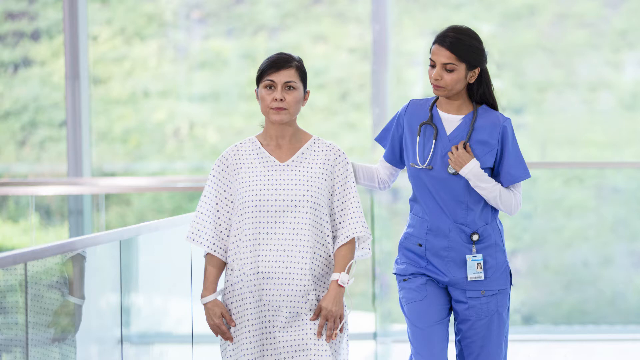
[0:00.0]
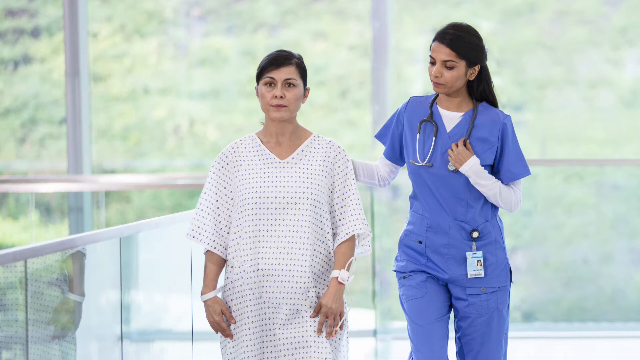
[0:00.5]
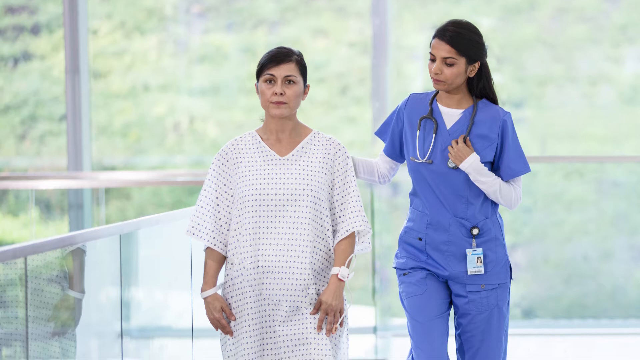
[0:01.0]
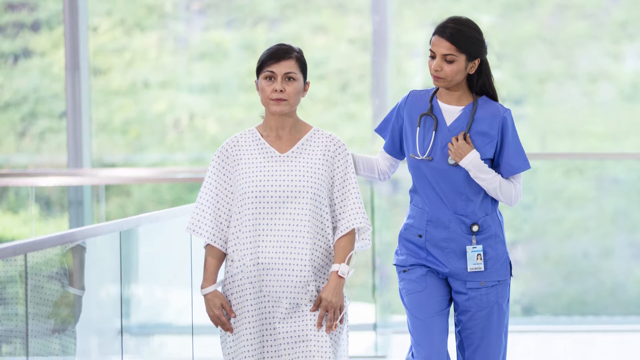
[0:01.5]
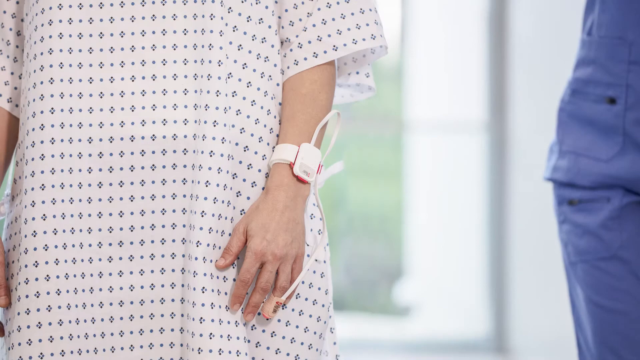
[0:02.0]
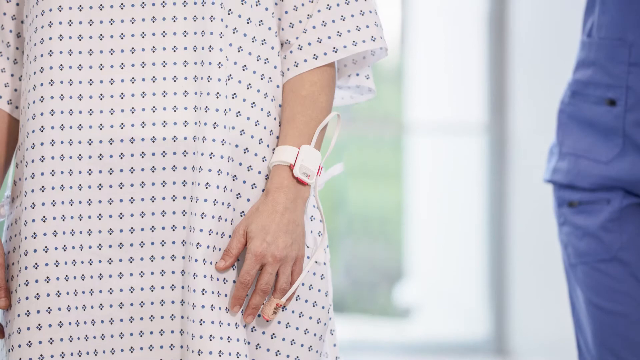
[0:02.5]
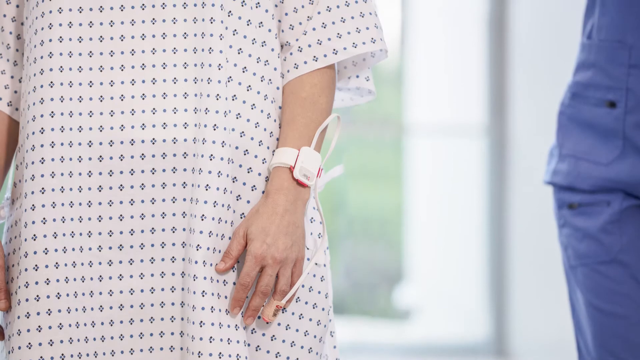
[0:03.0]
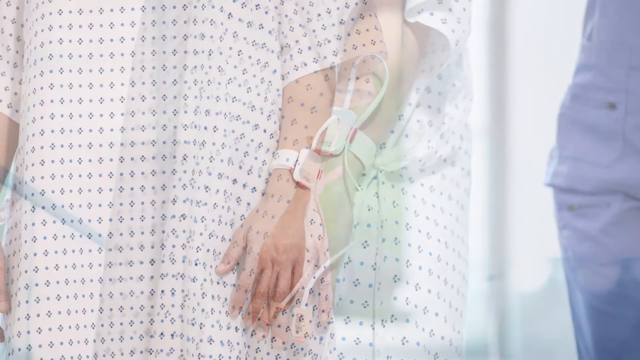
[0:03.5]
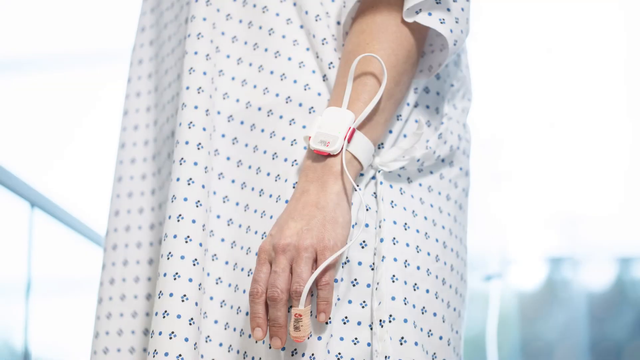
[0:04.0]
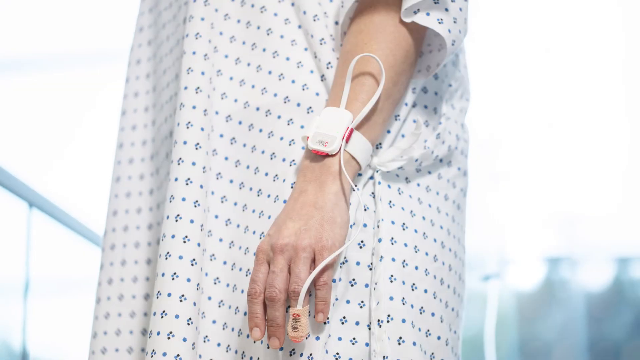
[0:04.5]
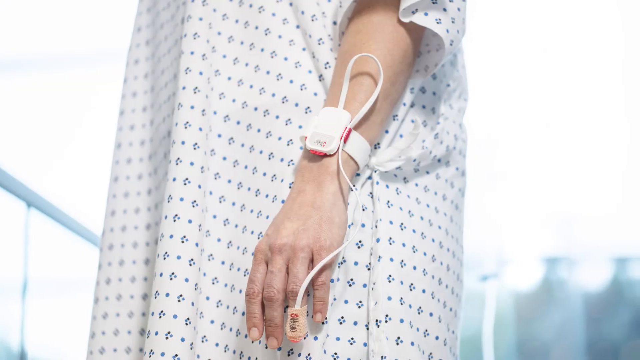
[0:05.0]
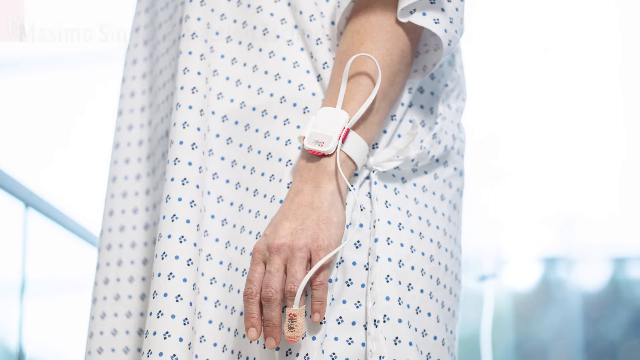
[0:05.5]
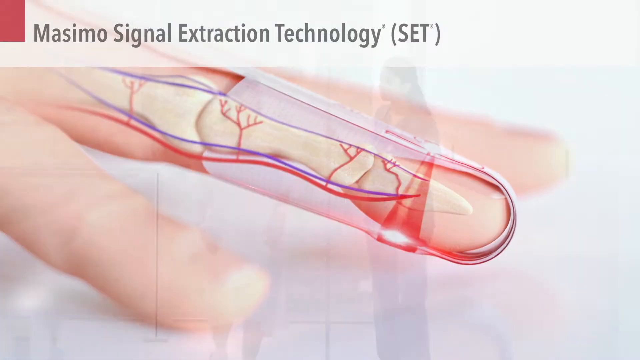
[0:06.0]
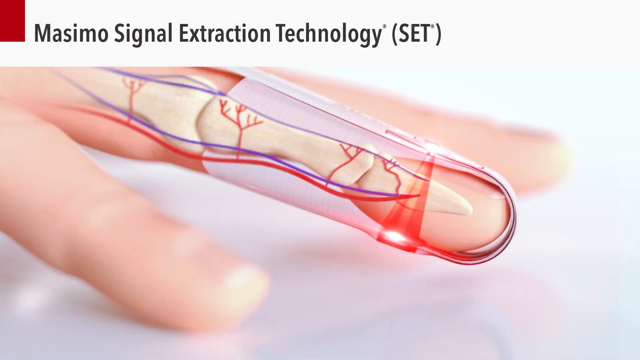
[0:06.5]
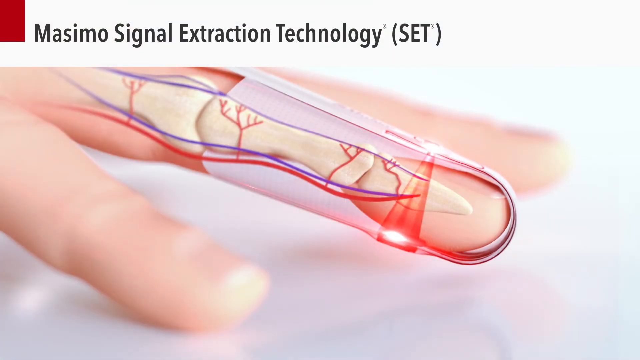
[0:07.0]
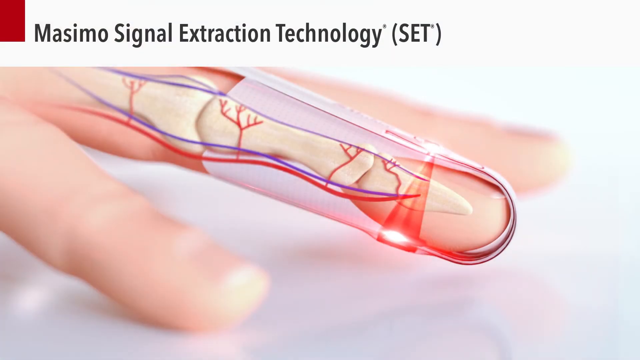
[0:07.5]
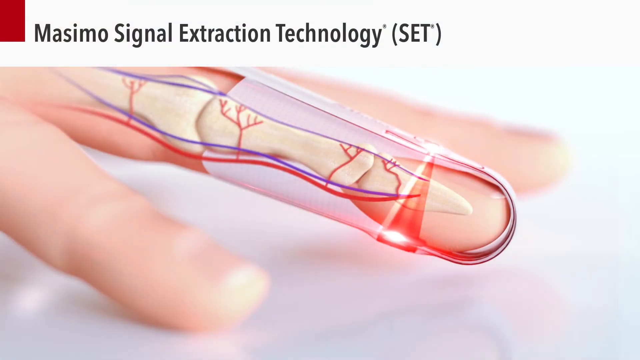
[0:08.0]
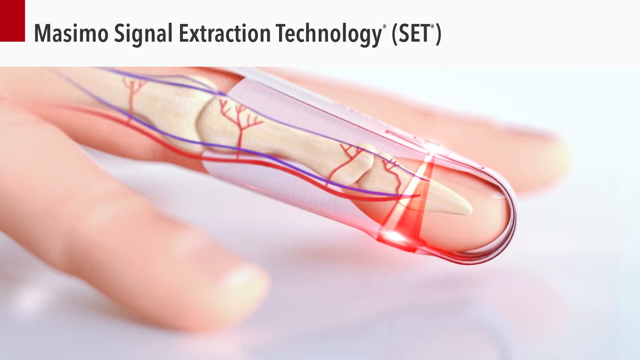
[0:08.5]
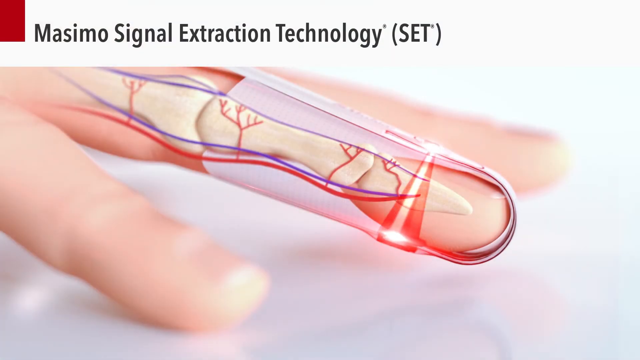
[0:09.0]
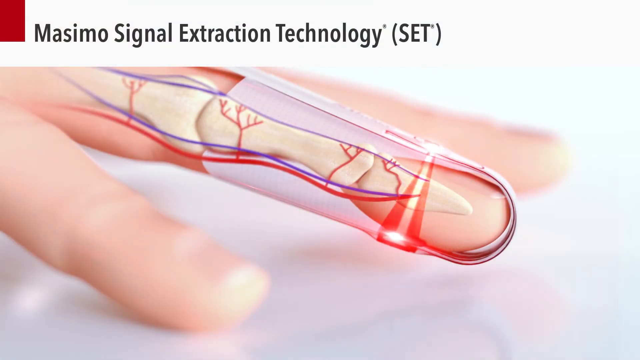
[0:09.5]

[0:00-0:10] A nurse is with a patient who wears a white gown with something like polka dots on it. On the patient's left wrist is a white monitor with a wire sticking out of it, attached to what looks like the middle finger. The video then cuts to a computer-animated image of a finger, the middle finger, with a device on it. The inside of the finger is visible, showing the bone and what look like red and blue veins, and some kind of light shoots from the device through the finger and into the other side of the device.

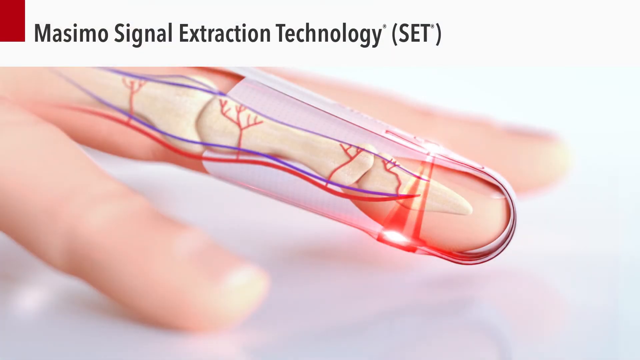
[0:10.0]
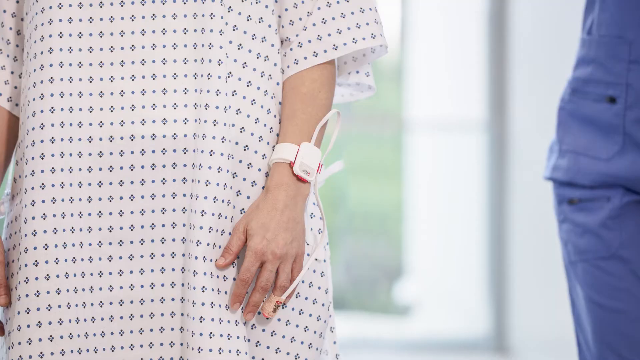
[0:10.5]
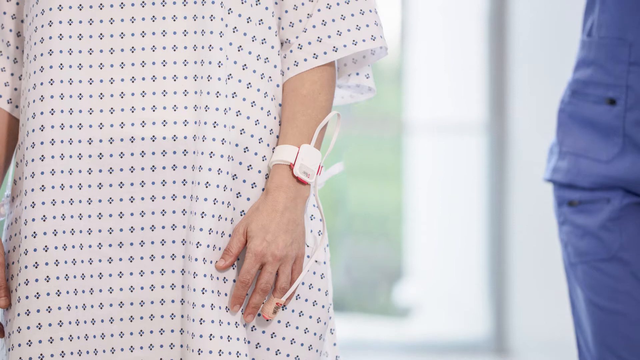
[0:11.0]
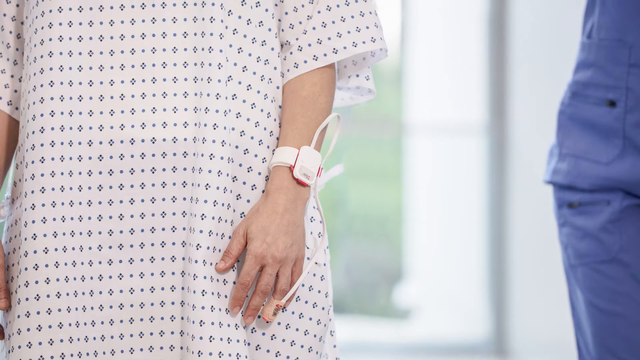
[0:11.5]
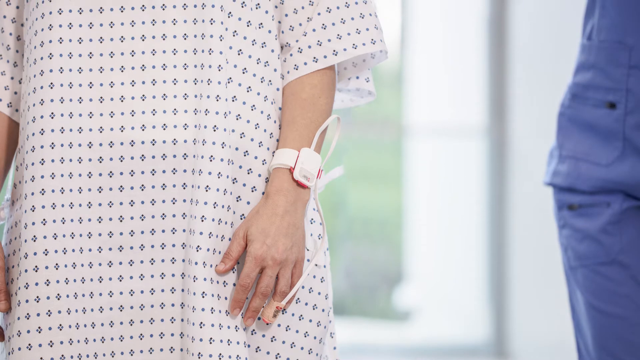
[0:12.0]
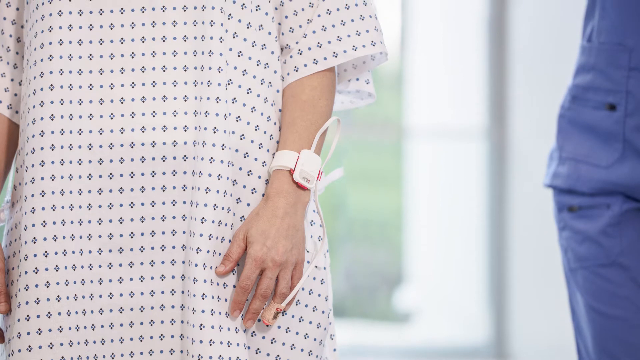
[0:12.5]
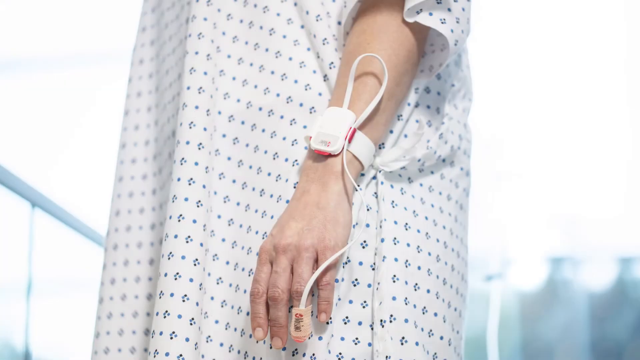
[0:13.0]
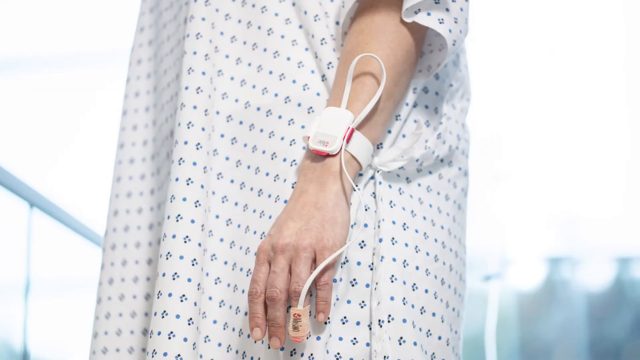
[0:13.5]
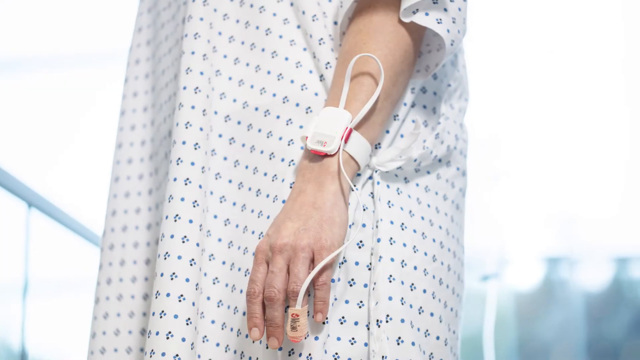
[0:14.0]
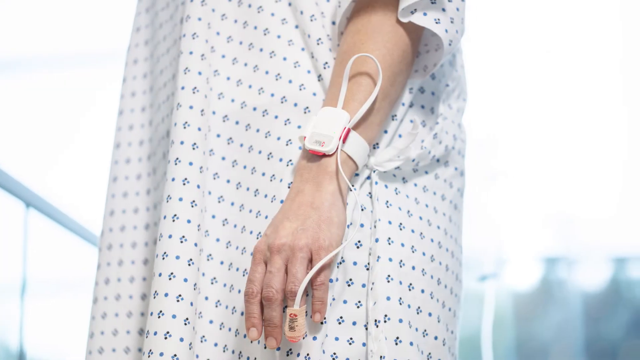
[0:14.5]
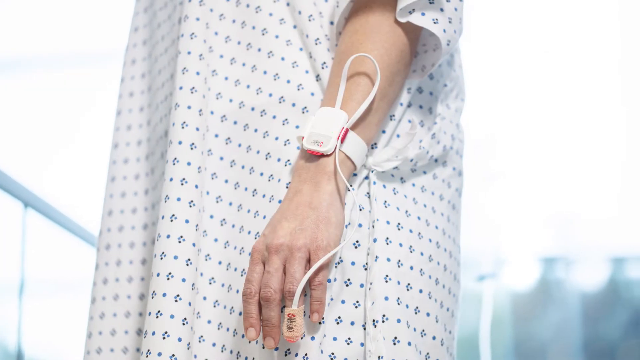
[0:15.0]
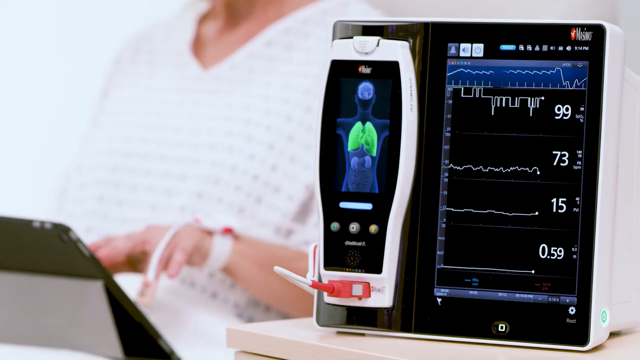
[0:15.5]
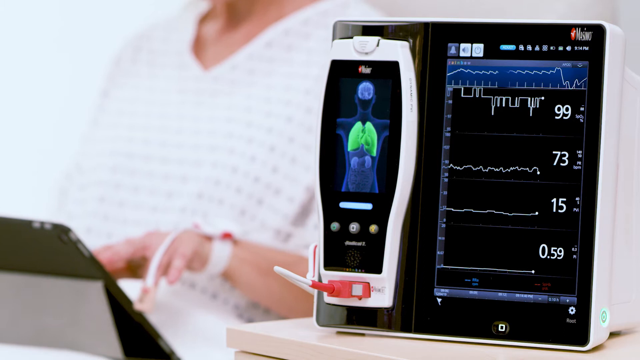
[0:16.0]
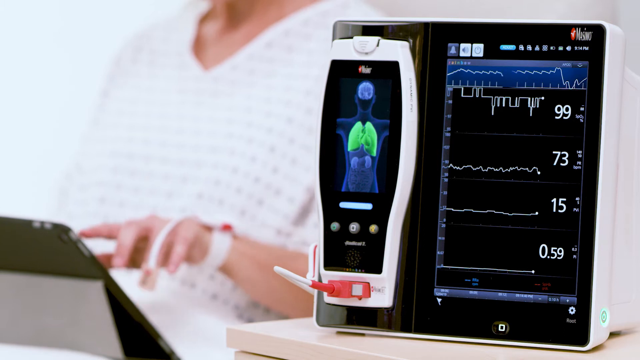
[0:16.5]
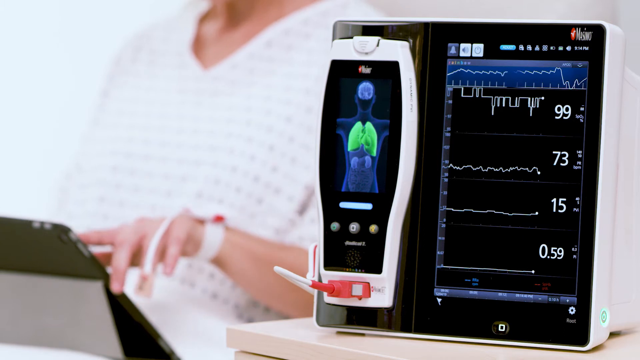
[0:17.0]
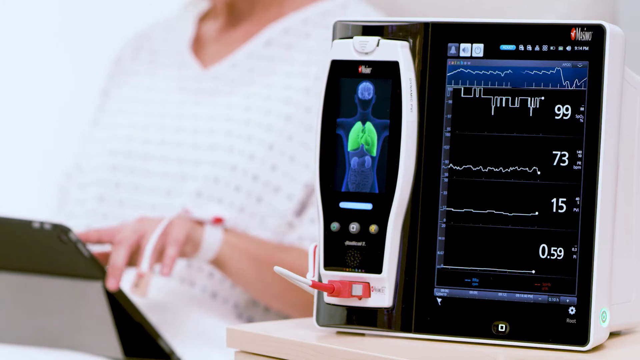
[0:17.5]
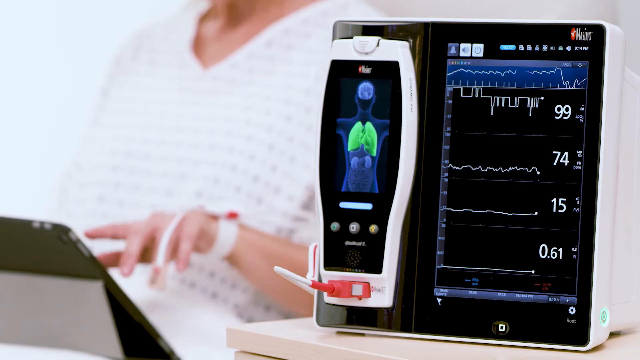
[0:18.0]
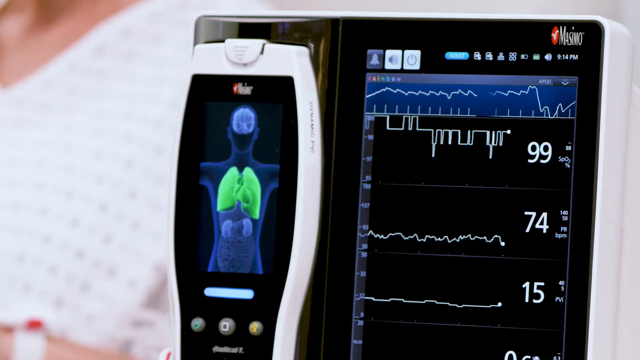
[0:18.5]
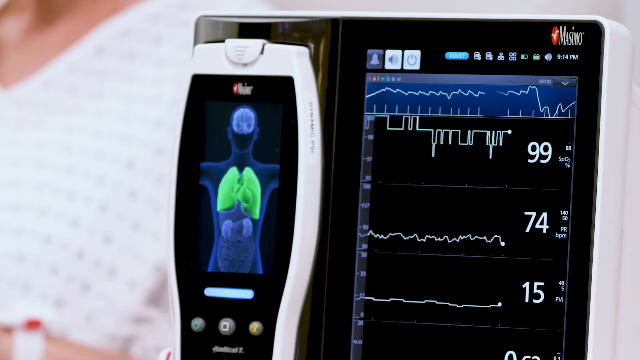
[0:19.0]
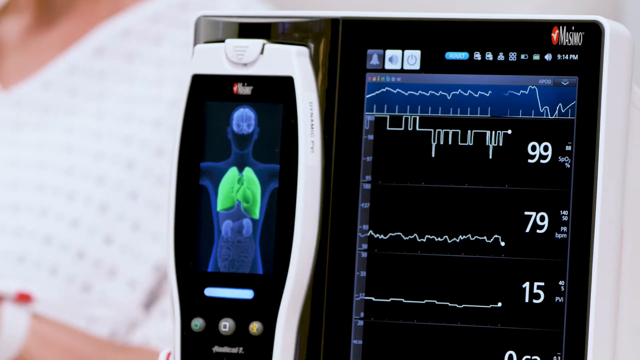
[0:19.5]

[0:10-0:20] A computer-generated image shows a middle finger with some kind of device attached to it, shooting light through the finger. The inside of the finger is visible, with the bone and some blue and red veins. The video cuts to a woman wearing a device on her ring finger, attached to a white monitor with a white wire on her left wrist. Next comes a close-up of a monitor displaying a silhouette of a human, and on the right side a line graph with some numbers on the right of the screen.